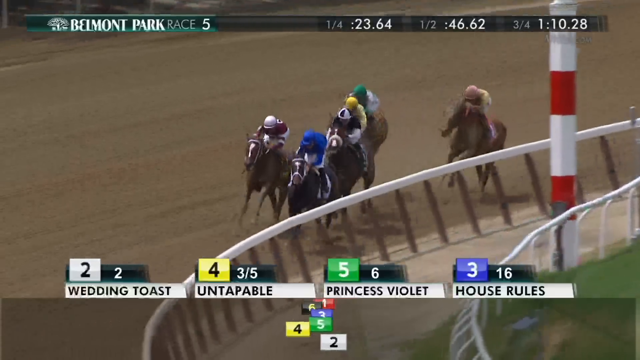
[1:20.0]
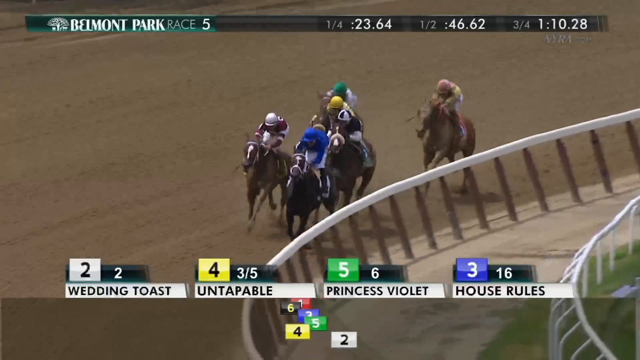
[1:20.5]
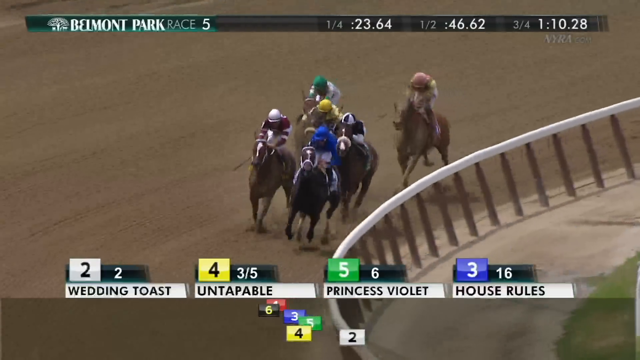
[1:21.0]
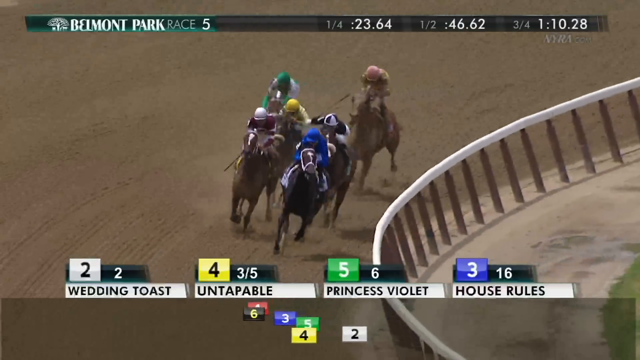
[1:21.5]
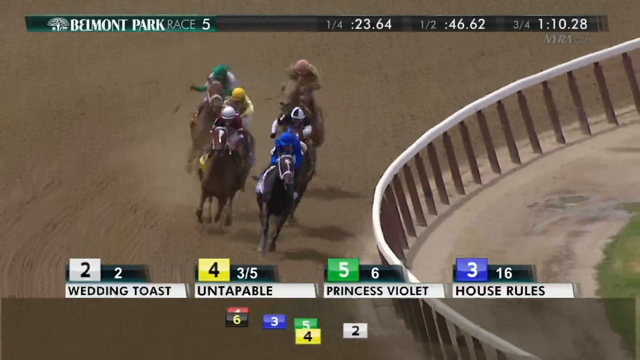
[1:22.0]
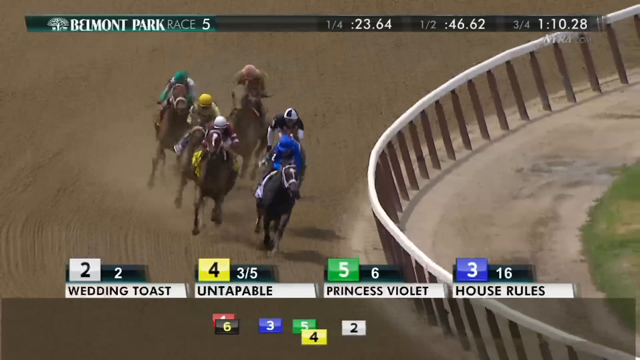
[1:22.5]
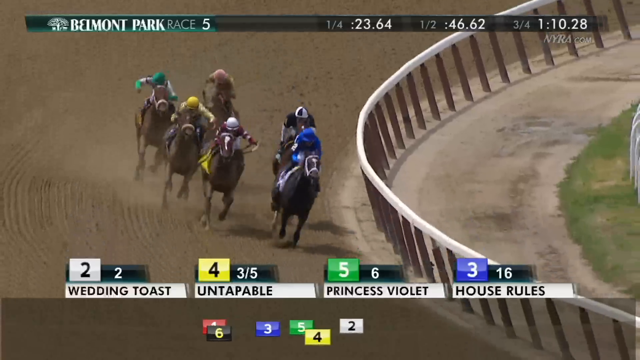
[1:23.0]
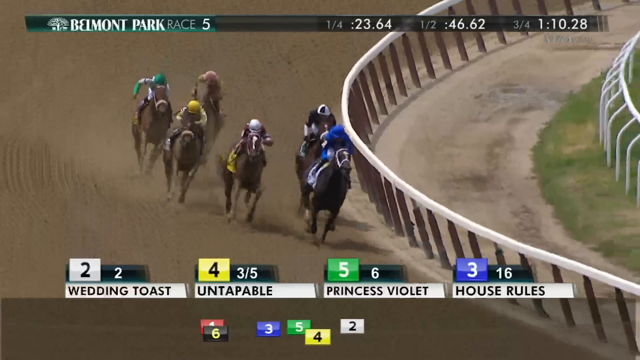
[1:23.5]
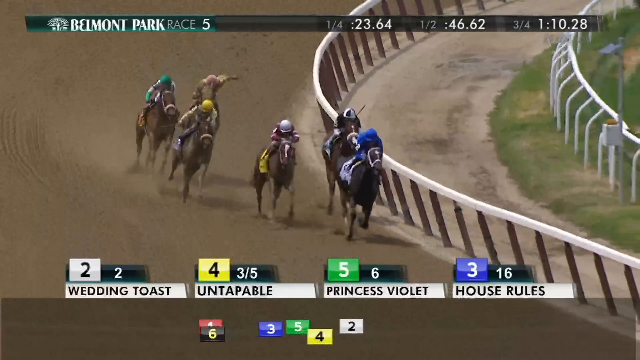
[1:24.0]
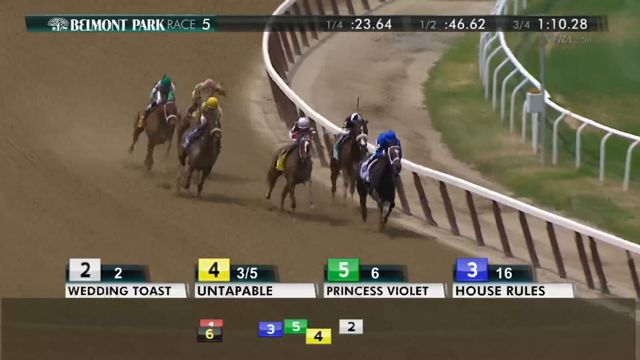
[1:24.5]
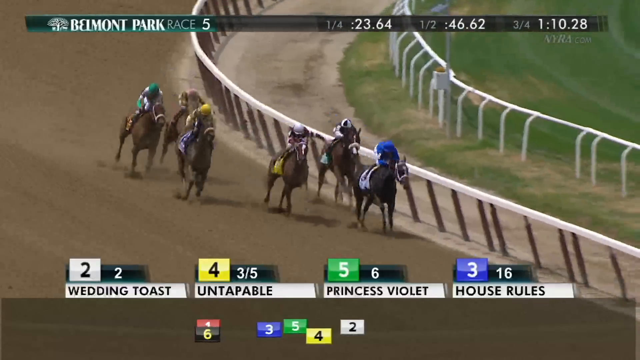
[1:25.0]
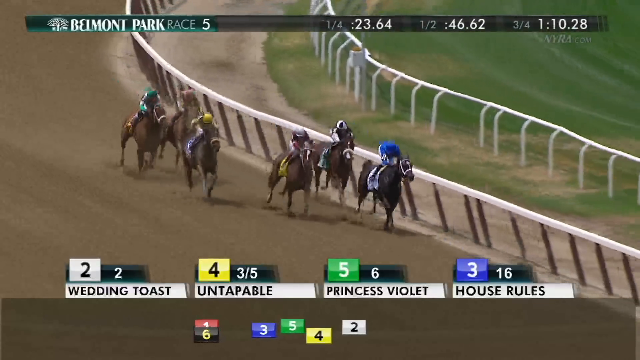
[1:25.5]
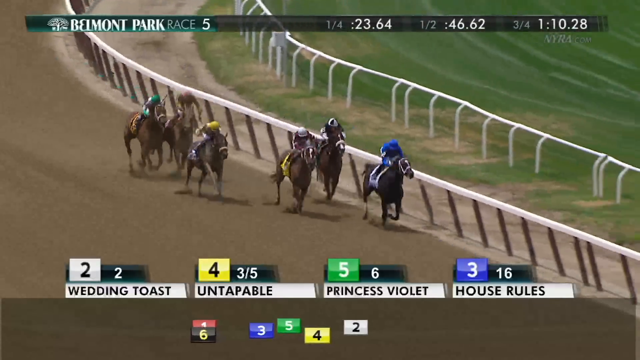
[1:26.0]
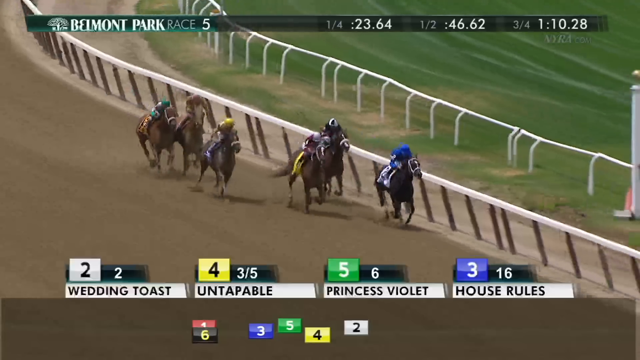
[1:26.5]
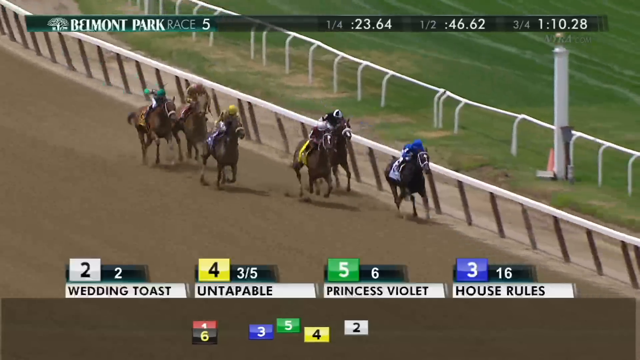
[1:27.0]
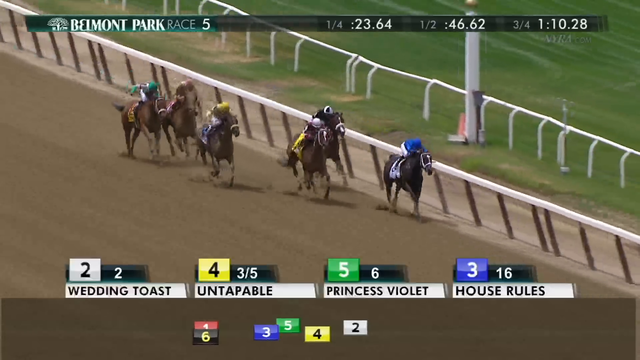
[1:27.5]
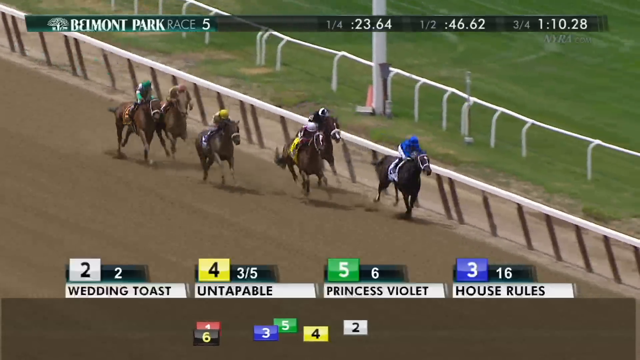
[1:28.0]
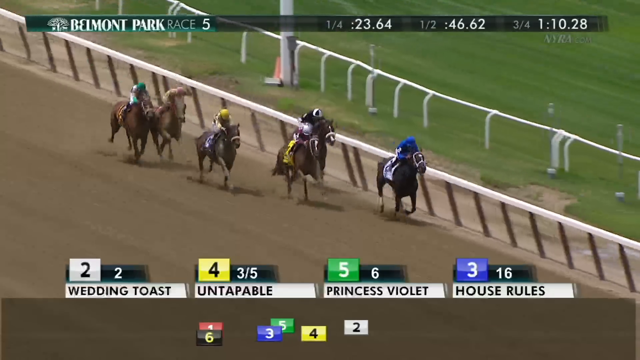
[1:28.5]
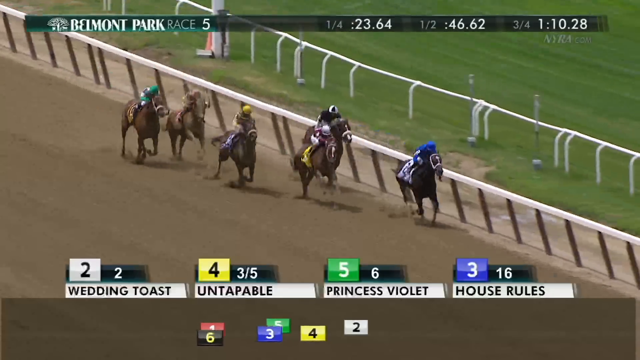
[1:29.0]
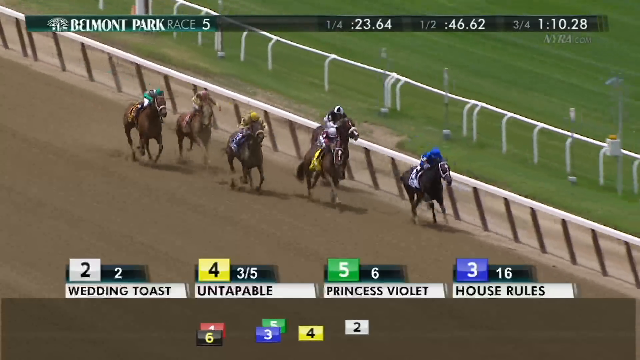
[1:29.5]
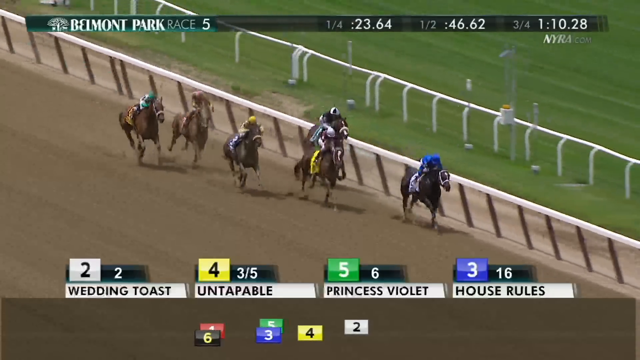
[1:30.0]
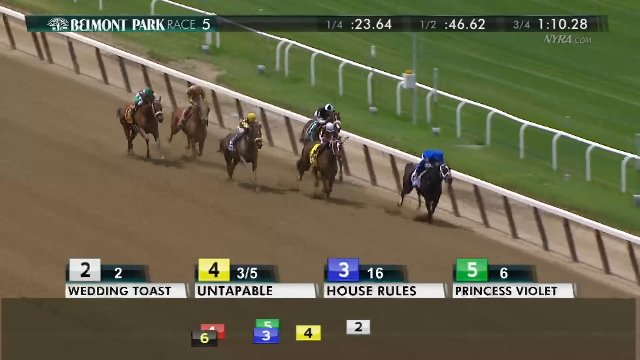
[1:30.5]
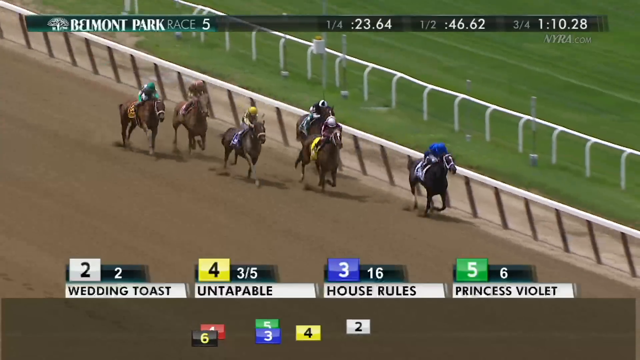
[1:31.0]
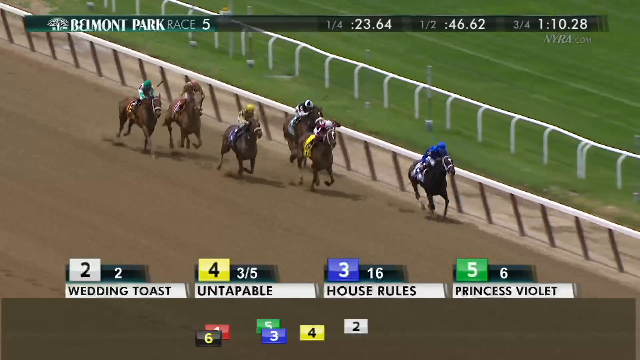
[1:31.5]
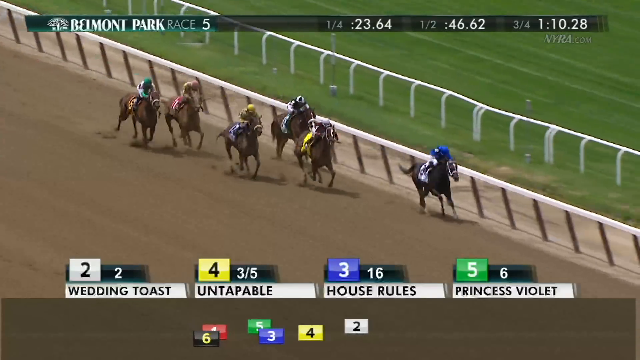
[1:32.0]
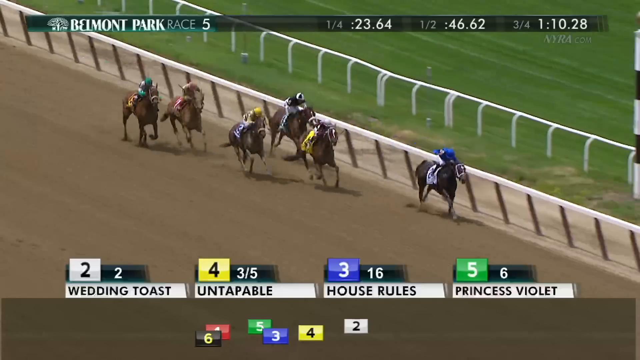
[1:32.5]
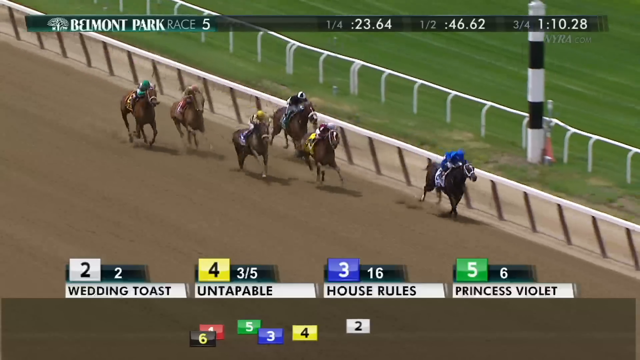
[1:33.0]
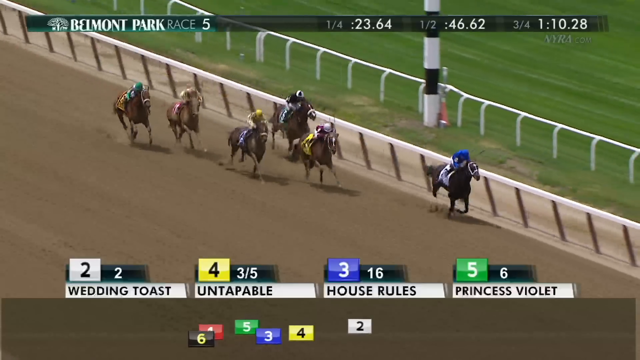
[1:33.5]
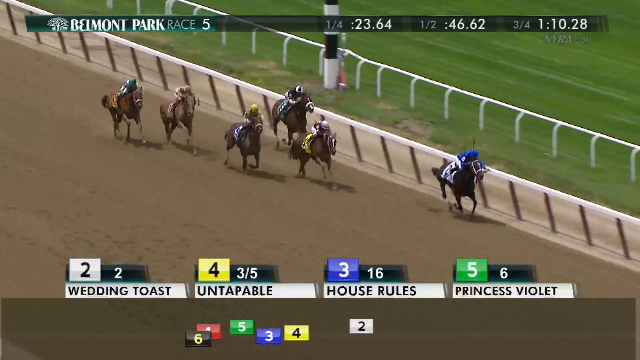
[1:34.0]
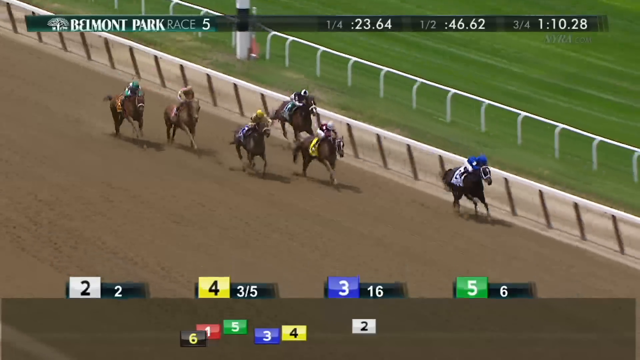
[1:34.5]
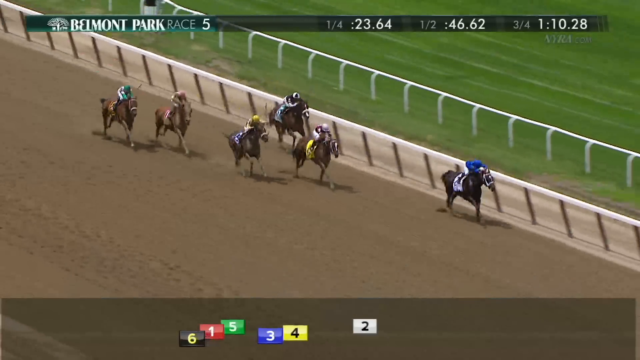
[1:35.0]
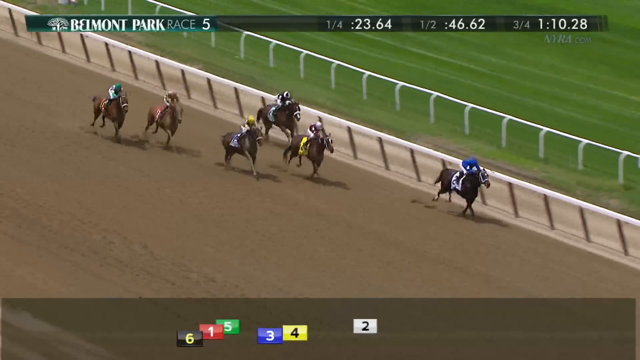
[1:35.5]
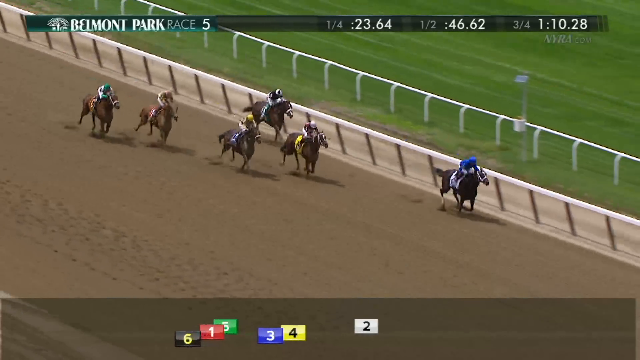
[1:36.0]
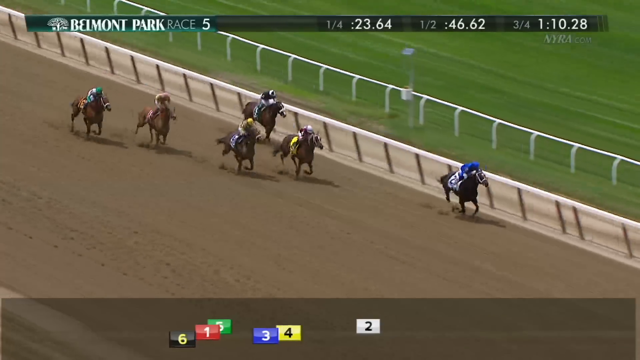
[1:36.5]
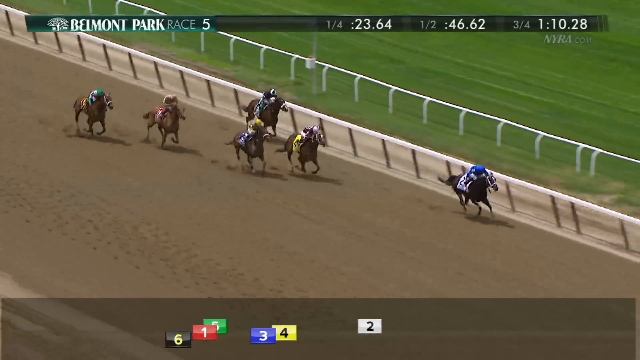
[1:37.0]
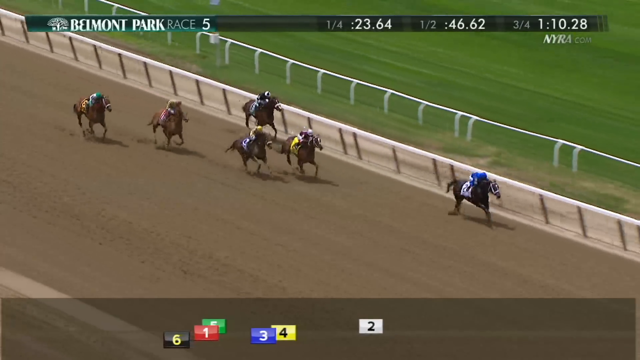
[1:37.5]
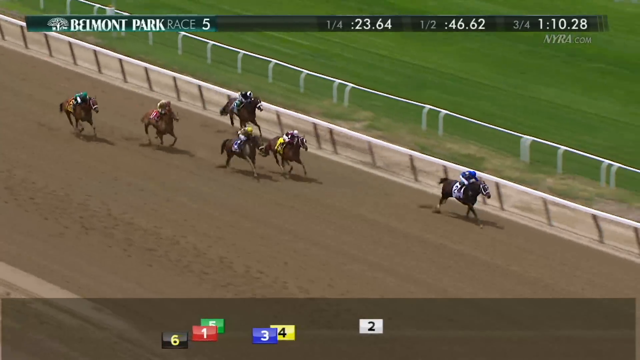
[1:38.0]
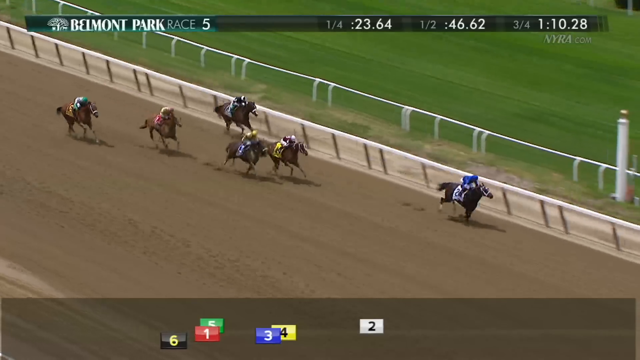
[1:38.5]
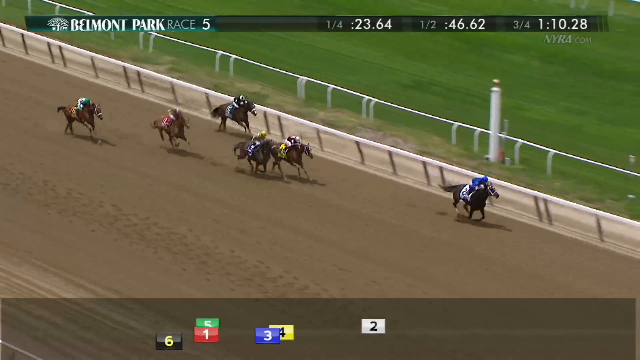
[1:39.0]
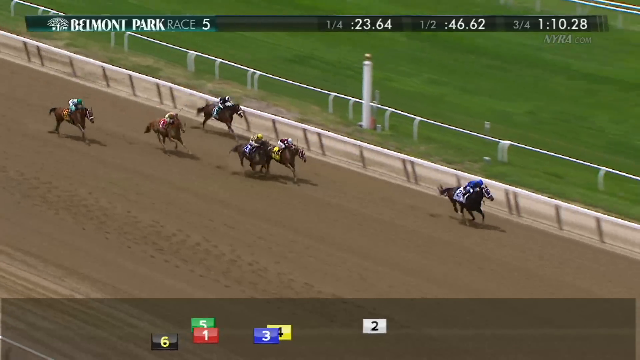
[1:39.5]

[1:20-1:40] The horses hit the second turn, moving back toward the grandstand with Wedding Toast still in the lead. Untapable is in second place, Princess Violet just behind in third, and House Rules in fourth, with just several horse lengths between the top four. Through the turn, Wedding Toast opens a lead of several lengths heading toward the finish, reaching six lengths ahead. In the last quarter of the race, Wedding Toast's lead grows from about half a length to over five lengths as the horses thunder along the dirt track.